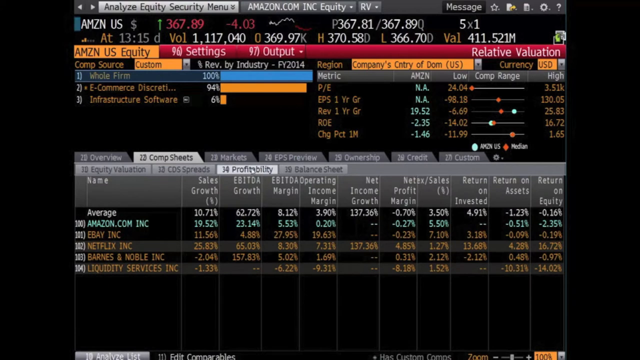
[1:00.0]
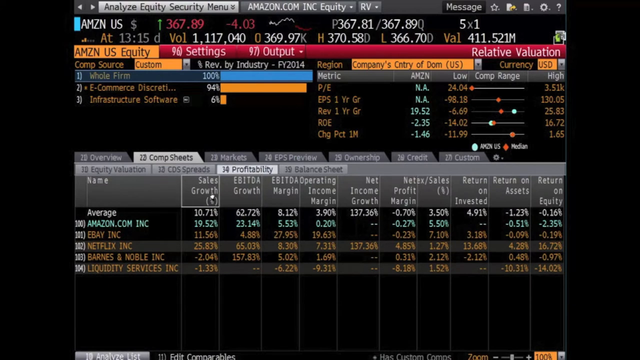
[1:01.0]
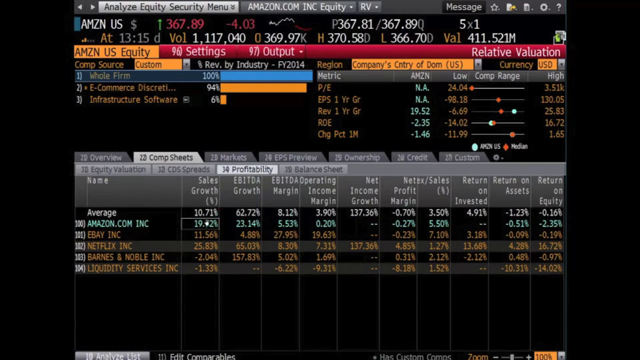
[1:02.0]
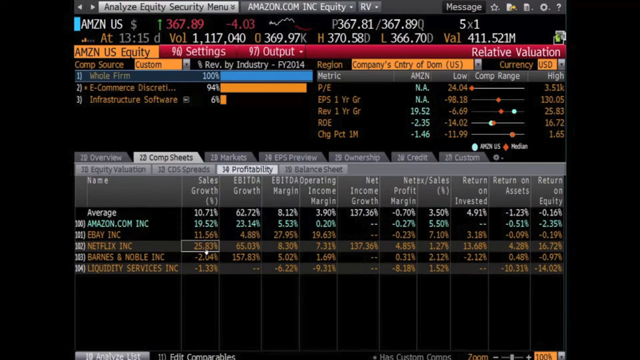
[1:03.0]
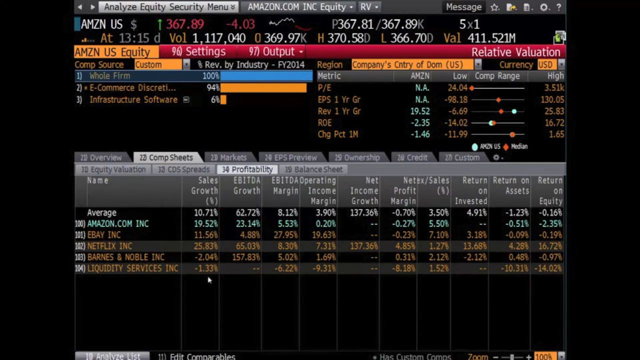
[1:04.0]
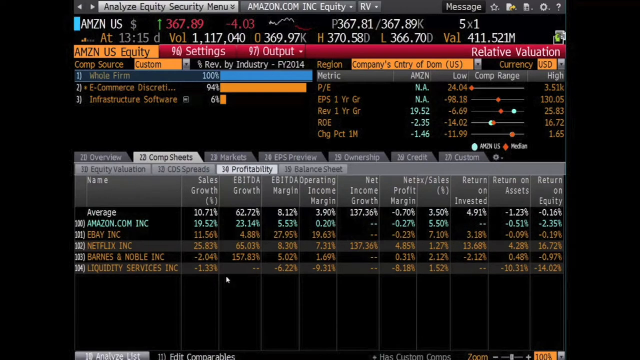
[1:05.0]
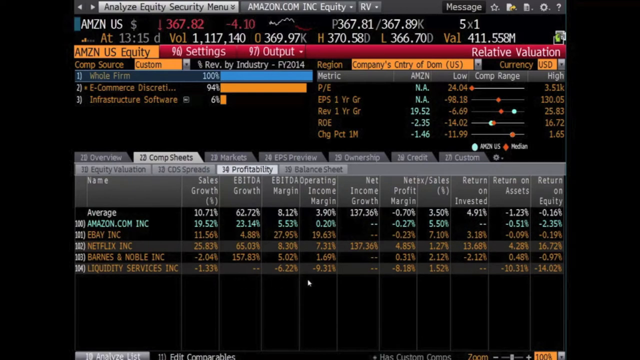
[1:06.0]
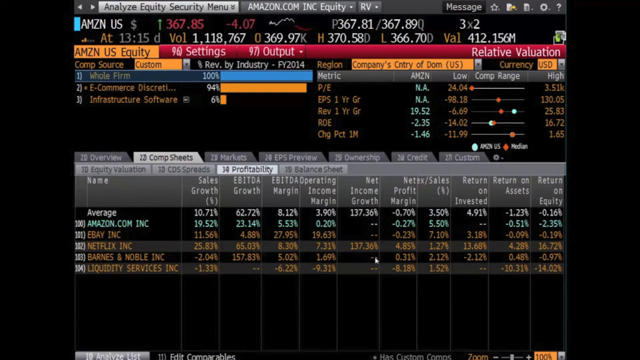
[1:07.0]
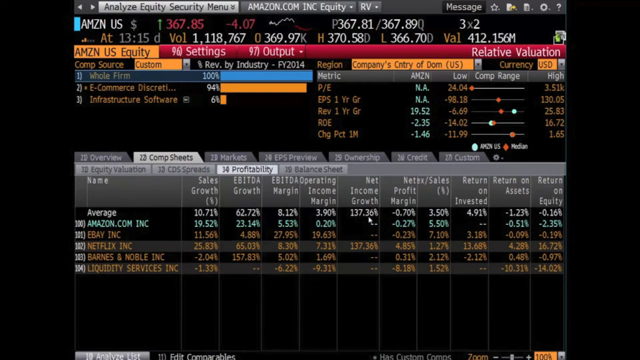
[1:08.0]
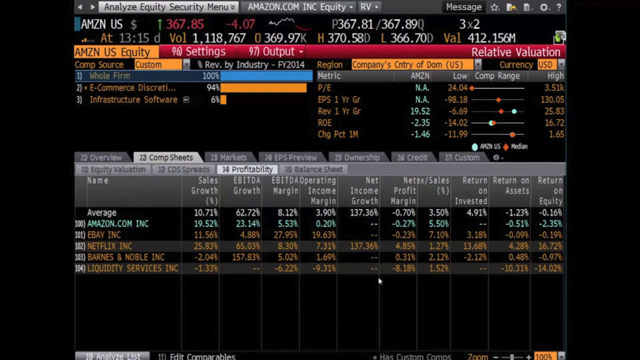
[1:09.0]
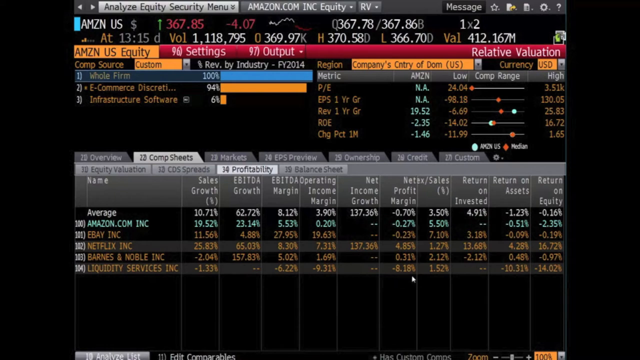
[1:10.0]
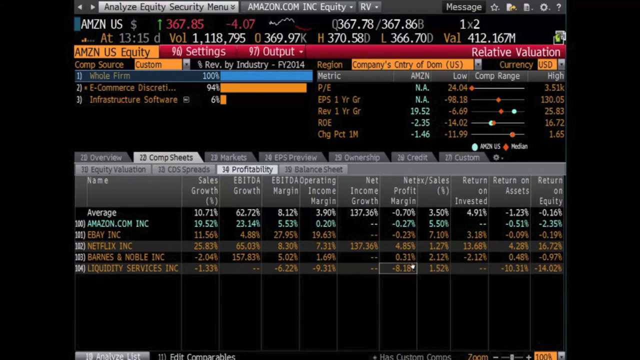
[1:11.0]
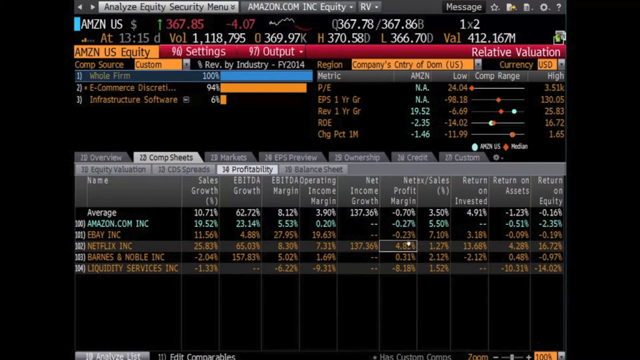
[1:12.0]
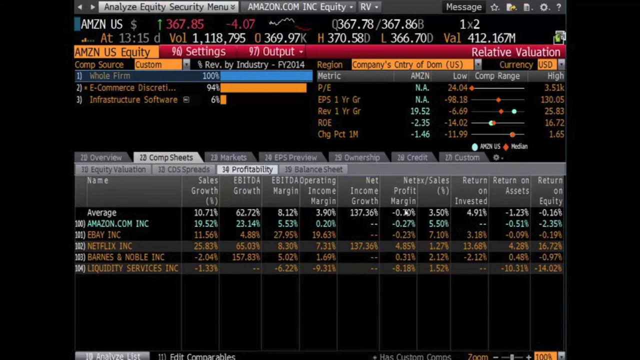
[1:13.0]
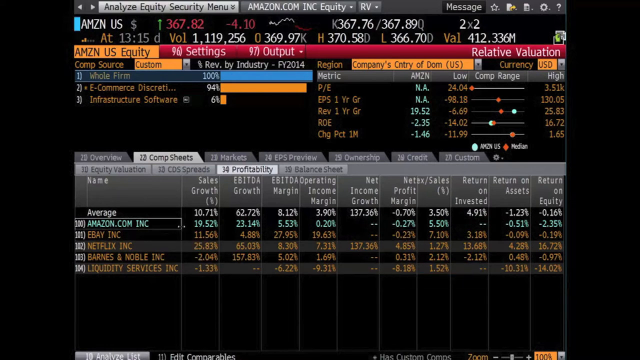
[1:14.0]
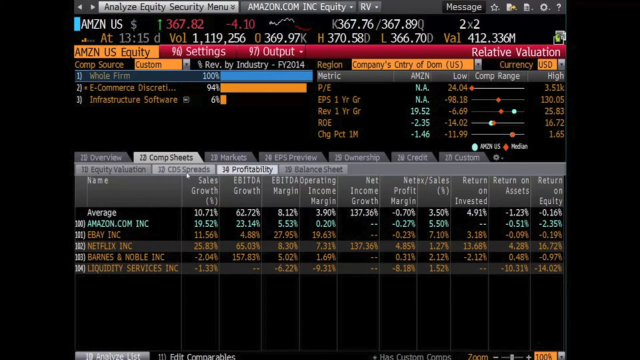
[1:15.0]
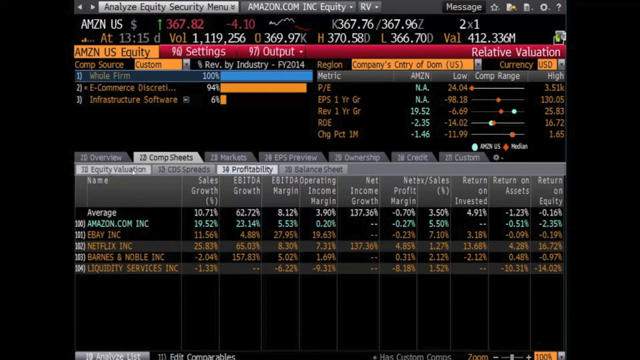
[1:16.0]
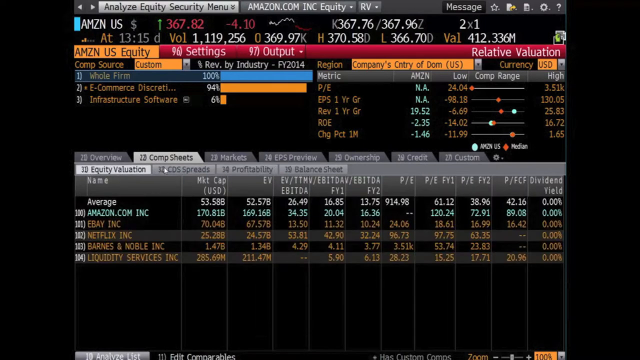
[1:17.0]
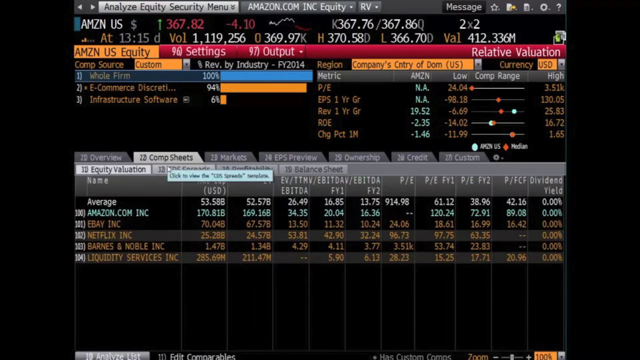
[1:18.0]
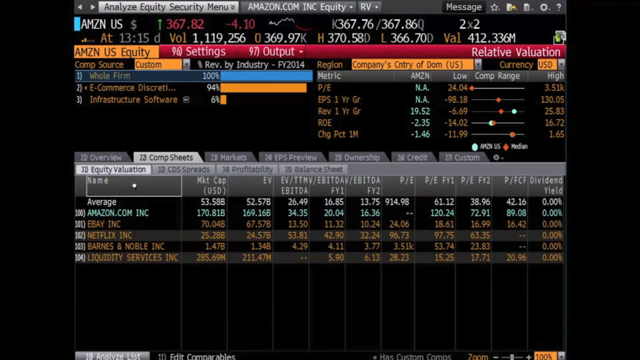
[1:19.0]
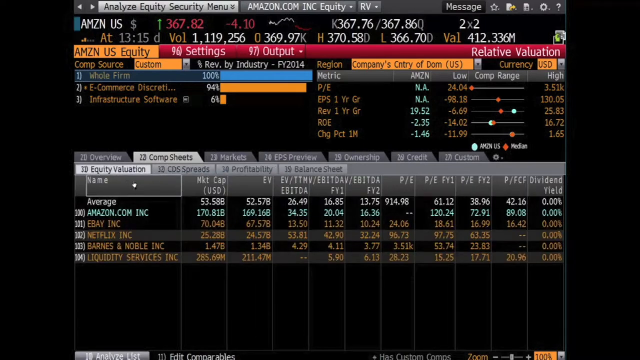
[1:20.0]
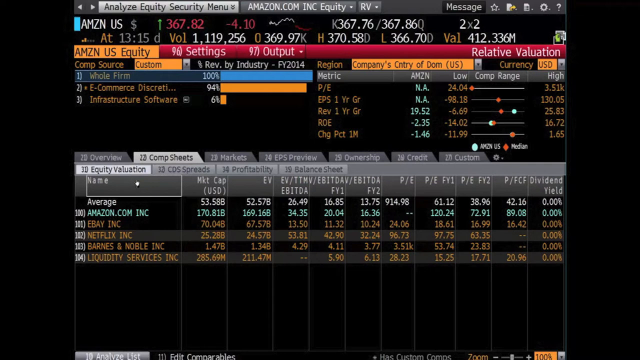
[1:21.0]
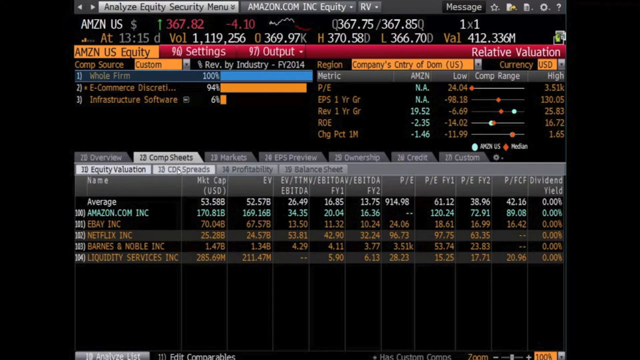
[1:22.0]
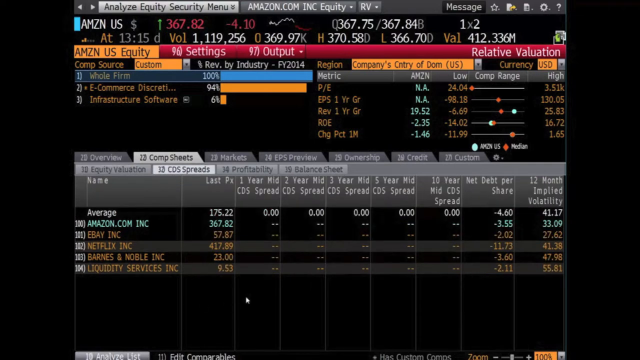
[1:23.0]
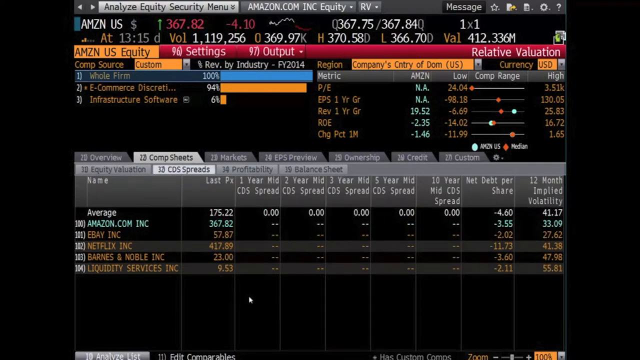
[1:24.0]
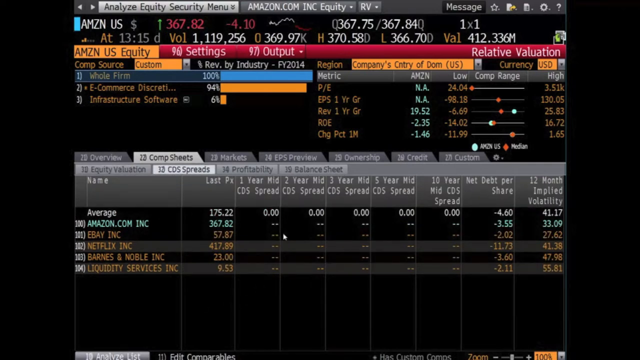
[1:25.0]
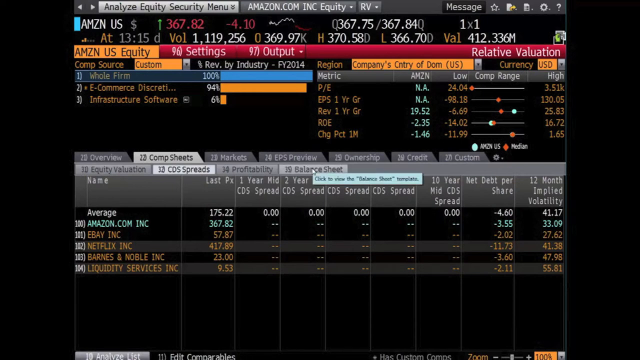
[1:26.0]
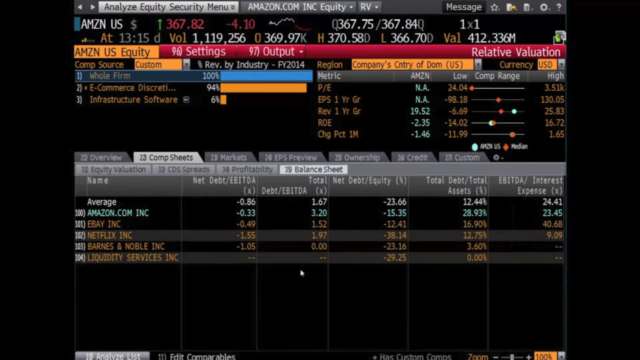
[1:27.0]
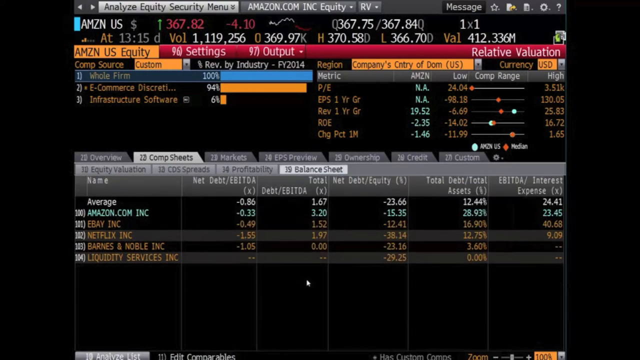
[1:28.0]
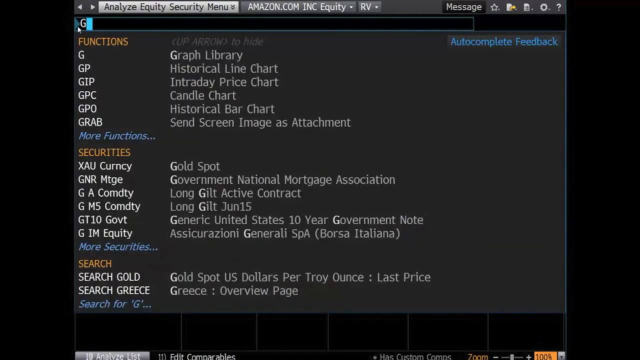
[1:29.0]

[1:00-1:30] Software that probably analyzes many things about companies such as Amazon, eBay and Netflix is on screen. Several sheets give different information about those companies: profitability, balance sheet, COS spreads and equity valuation. The main action is a cursor moving to different tabs in the software, bringing up a lot of data, such as market cap, dividend yield, return on equity, return on assets, return on invested, sales in percentages, profit margin, income growth, operating income margin and sales growth. Most of what is on screen is written text and numbers.